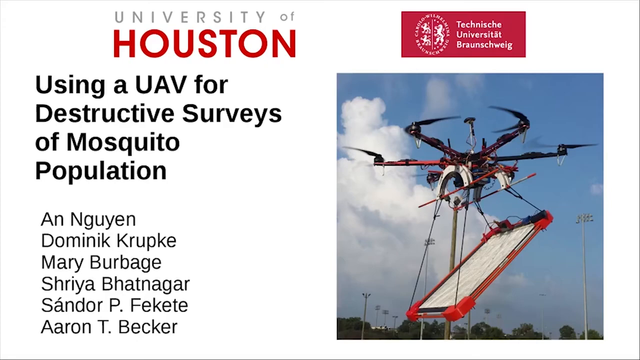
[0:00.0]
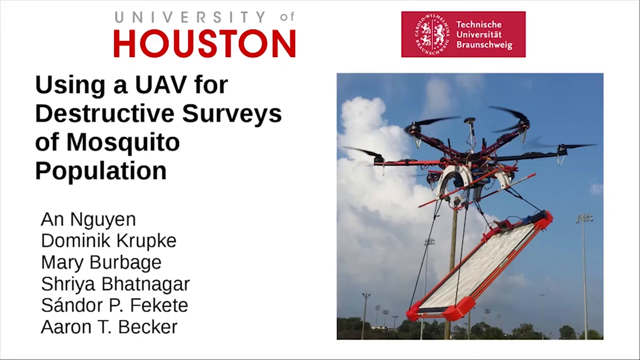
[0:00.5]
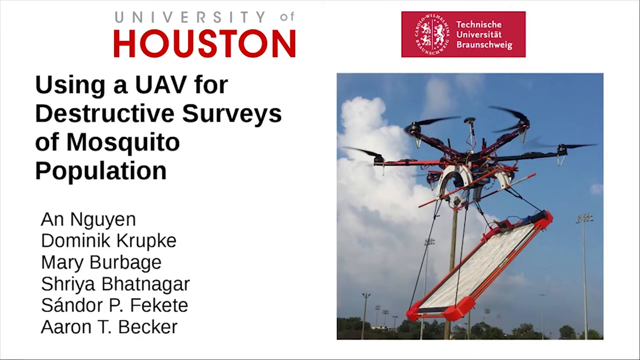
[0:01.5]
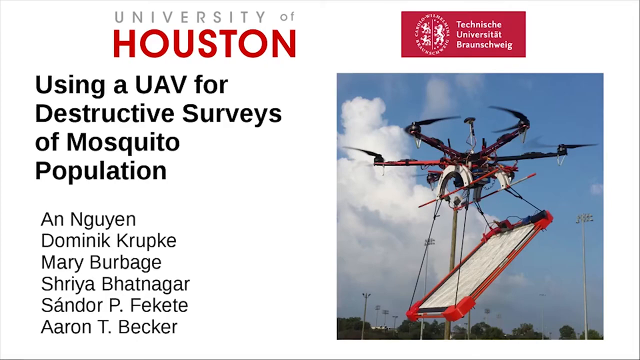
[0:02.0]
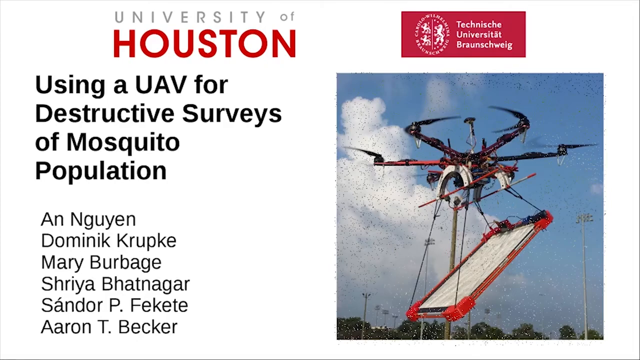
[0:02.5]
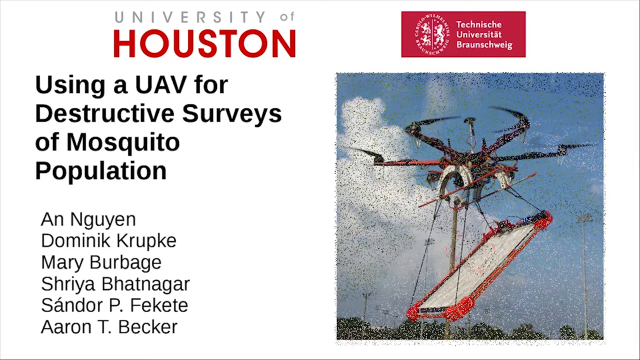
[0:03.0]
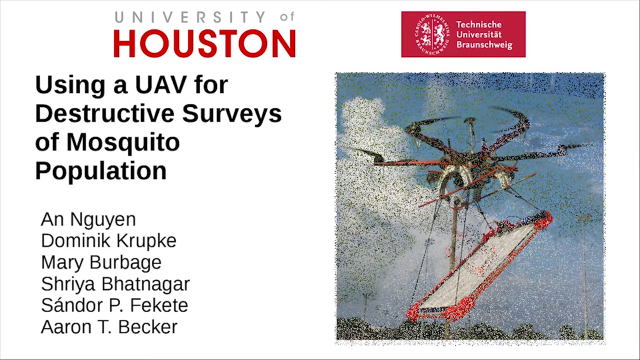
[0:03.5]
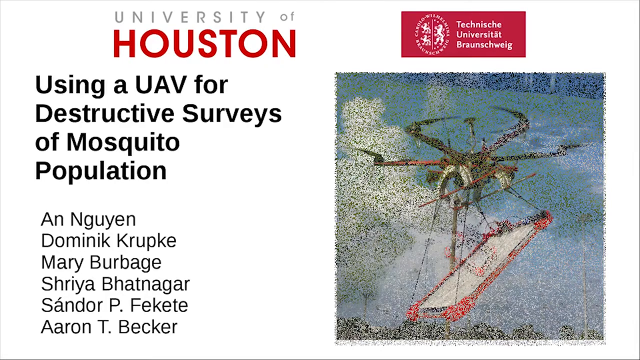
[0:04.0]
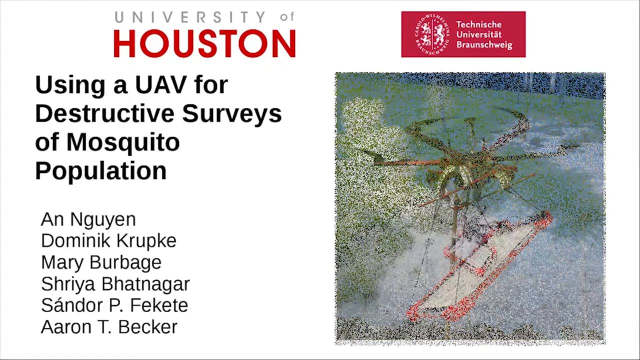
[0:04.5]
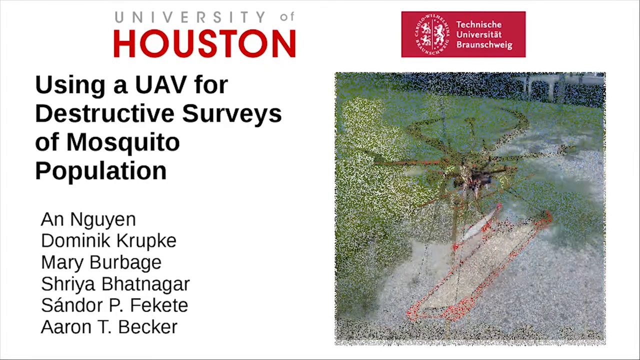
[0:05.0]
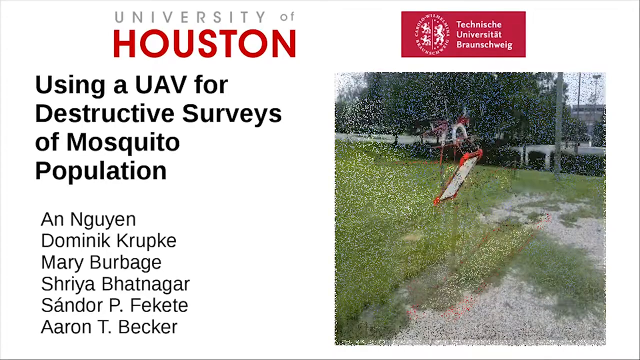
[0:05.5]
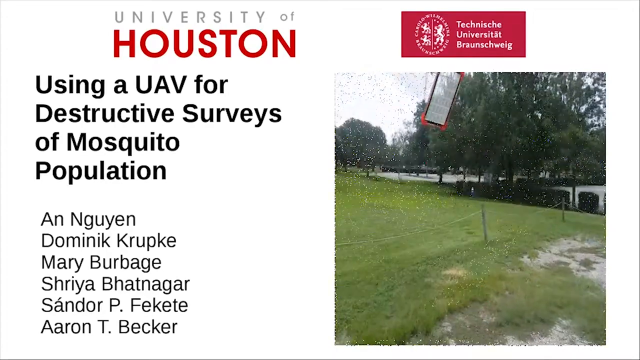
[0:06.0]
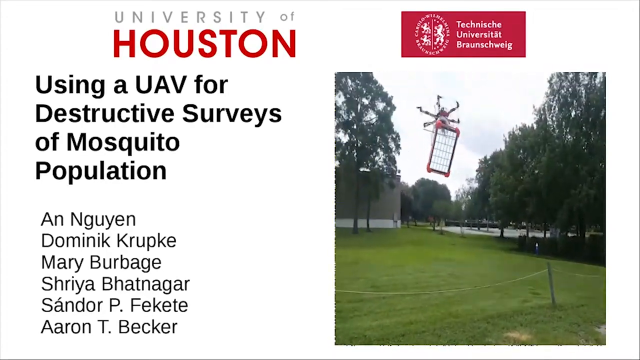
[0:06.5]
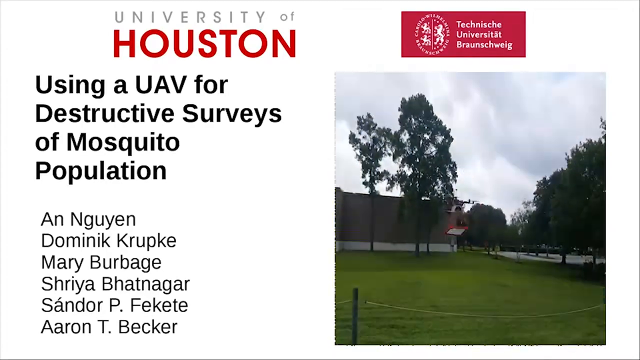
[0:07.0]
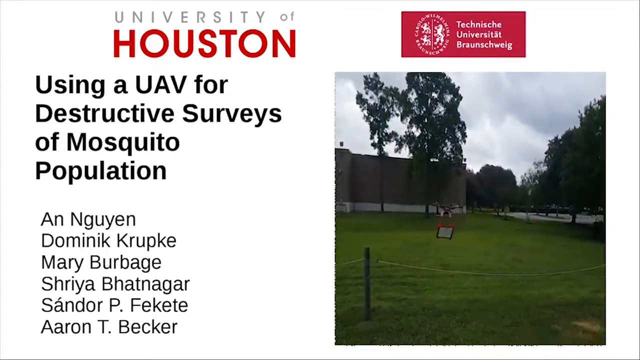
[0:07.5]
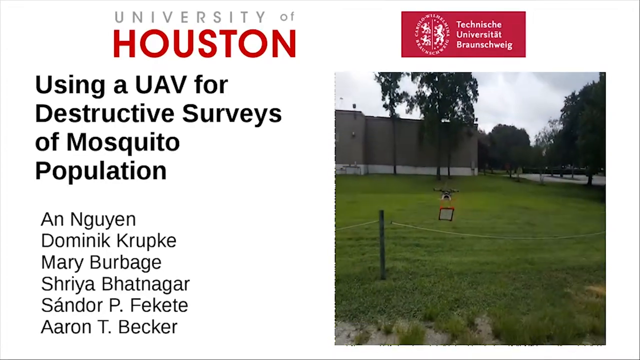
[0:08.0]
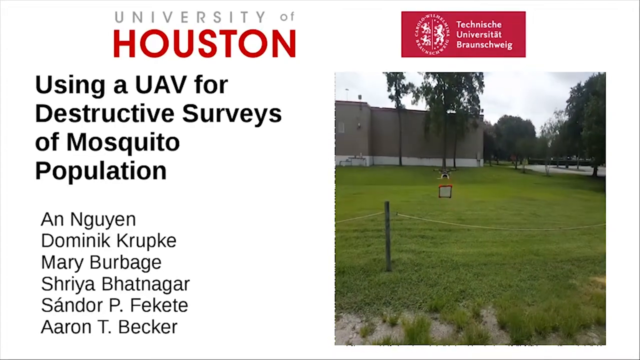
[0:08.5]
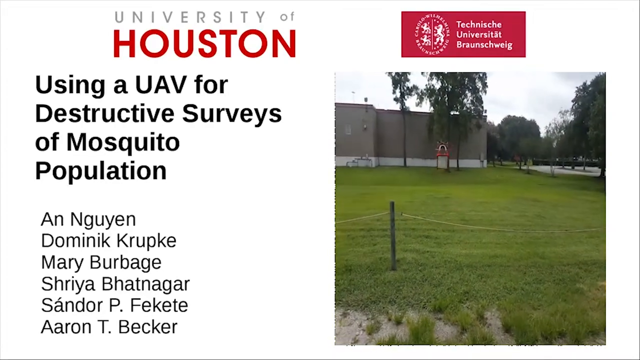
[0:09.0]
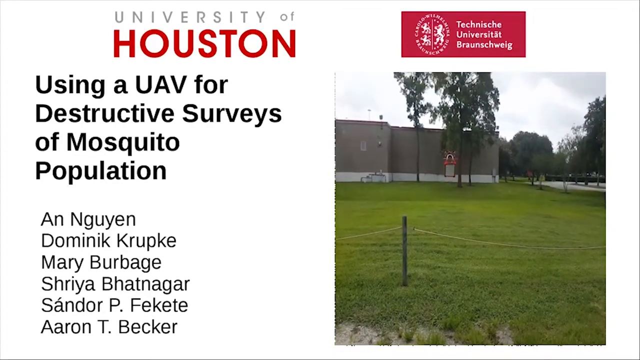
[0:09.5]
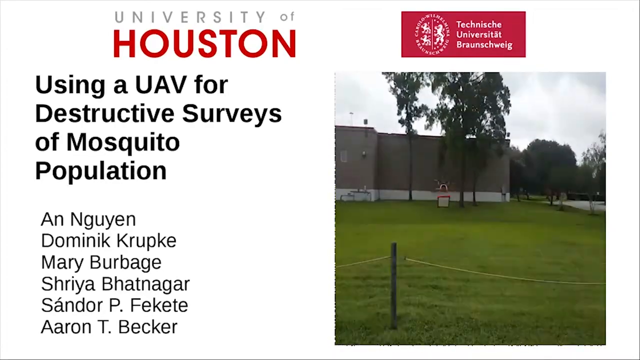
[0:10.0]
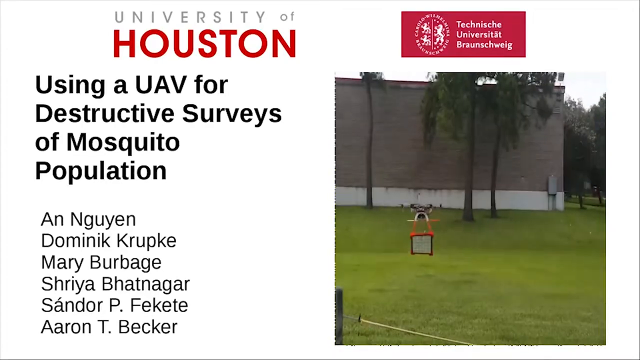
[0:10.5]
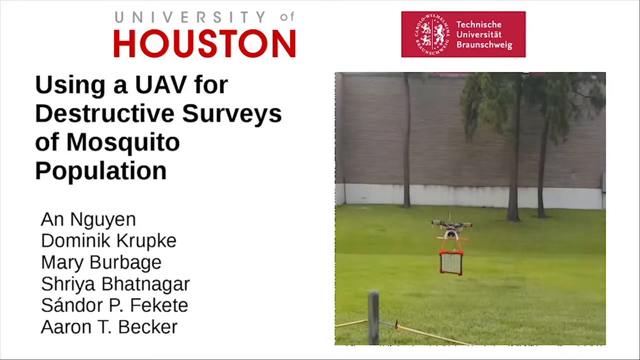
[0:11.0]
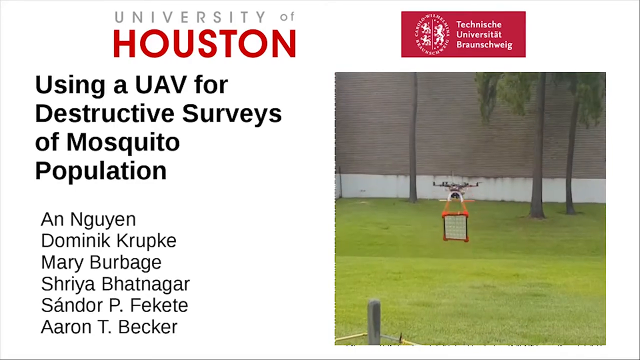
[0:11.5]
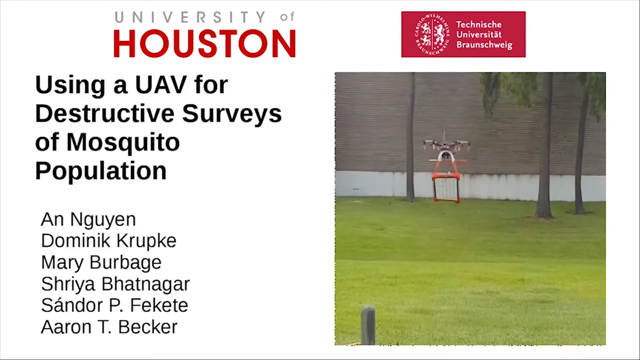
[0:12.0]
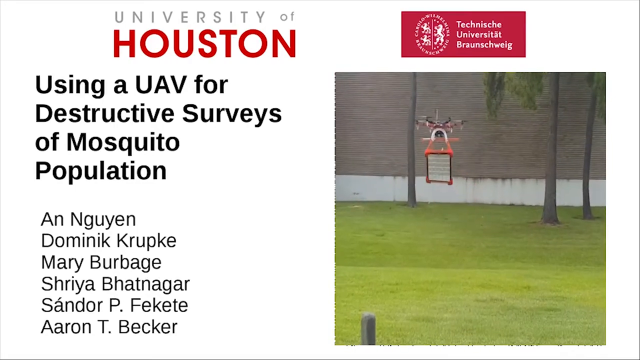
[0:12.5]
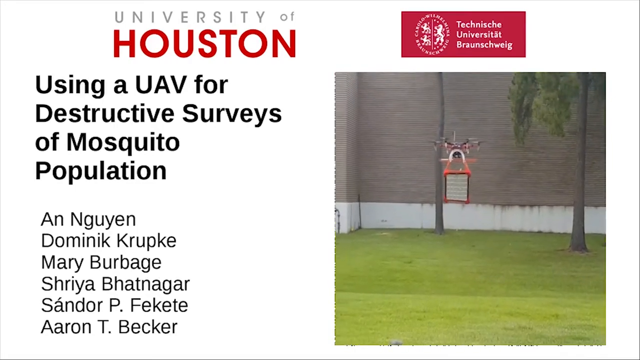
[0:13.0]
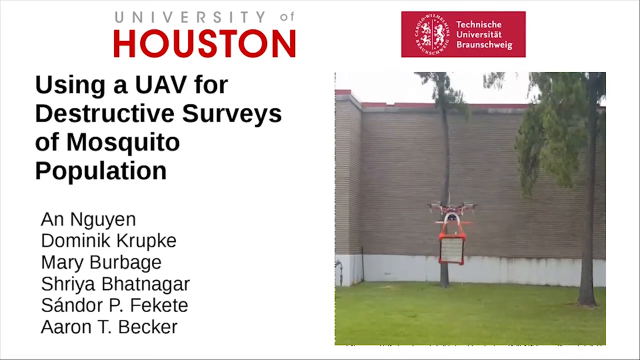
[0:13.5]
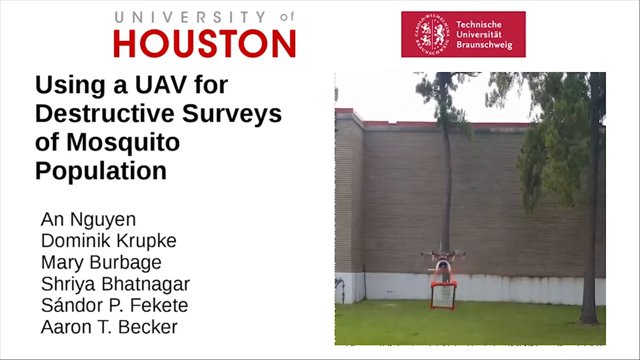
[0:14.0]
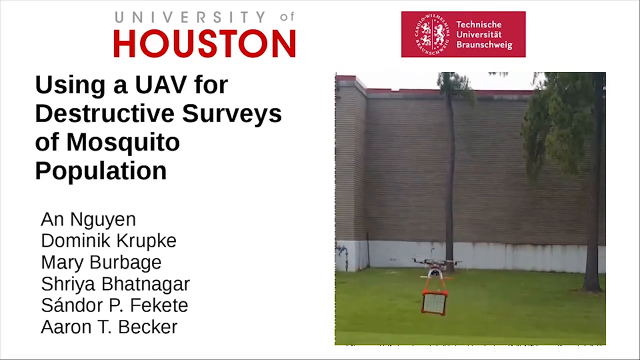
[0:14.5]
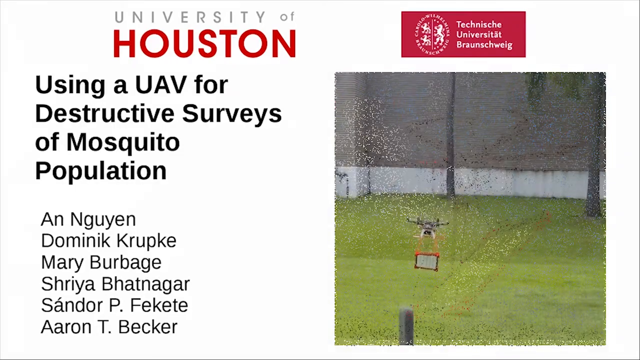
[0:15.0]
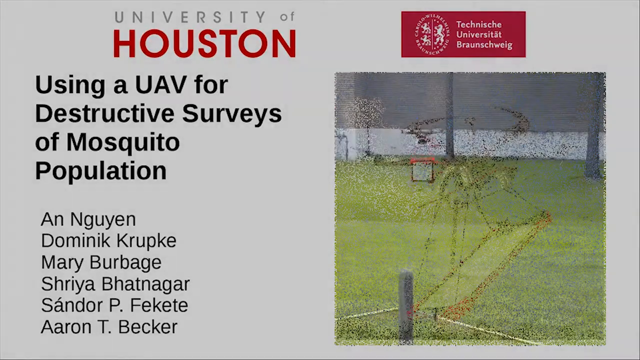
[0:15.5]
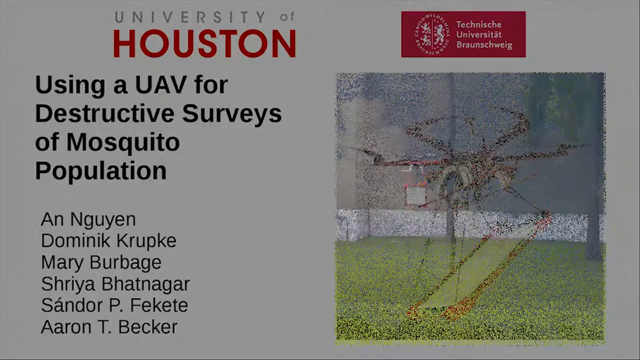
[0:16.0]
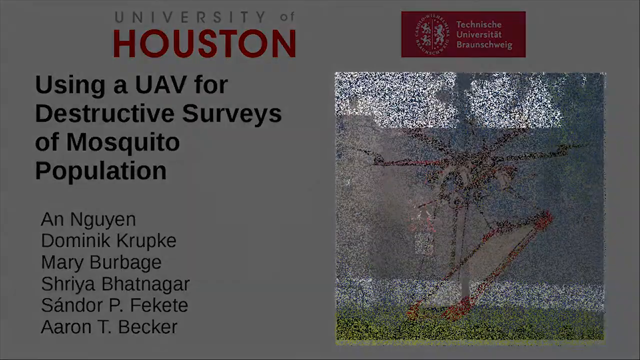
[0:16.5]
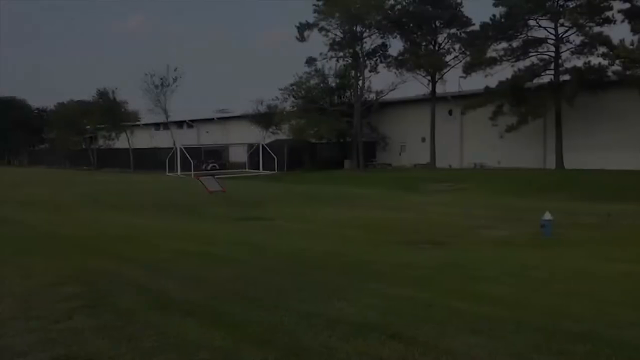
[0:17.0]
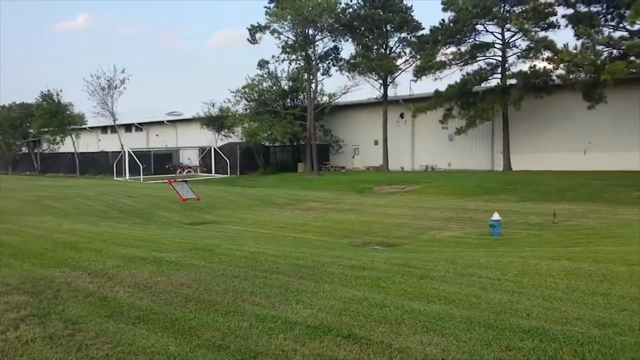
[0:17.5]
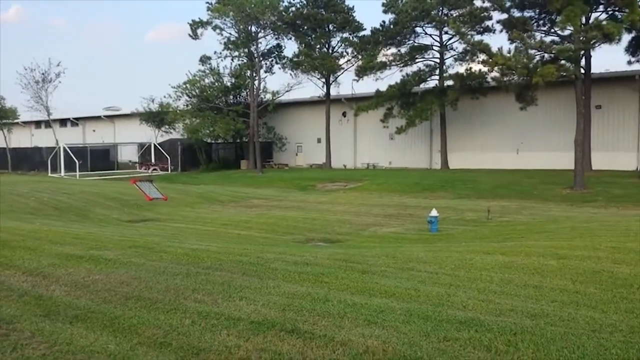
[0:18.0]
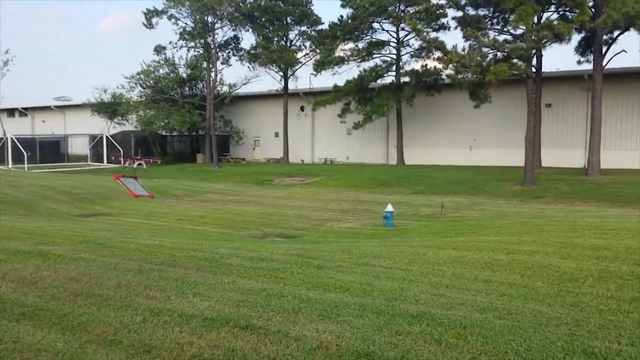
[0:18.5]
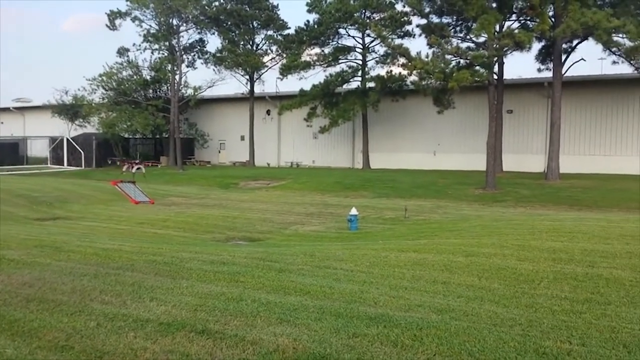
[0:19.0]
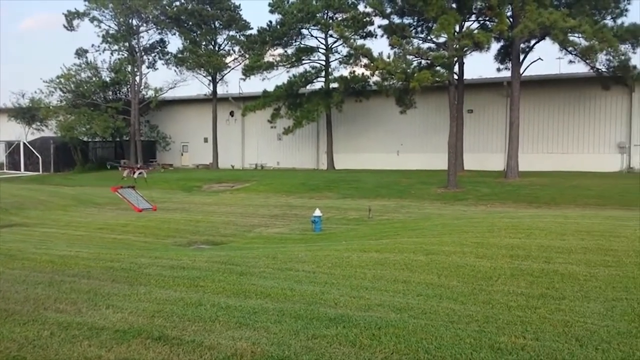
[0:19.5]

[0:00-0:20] The video opens on what looks like a PowerPoint-style slide with a white background. In the upper left corner, "University of" appears in gray, followed by "Houston" in a burgundy color. Underneath, in black, it says "Houston," and then a title with three capitalized letters reads "UAV for," with "destructive surveys" on the next line and "of mosquito population" on the line after. Below are names, including one spelled N-G-Y-U-Y-E-N, Dominik Krupke, and several others. Next, a drone appears carrying something like a little sheet. The drone flies up into the air carrying a box-shaped, rectangular object, possibly a screen, and moves up and down. It goes over grass near a blue fire hydrant that appears to be there just for demonstration purposes and apparently not in use, in the middle of a grassy area that seems to be private property.